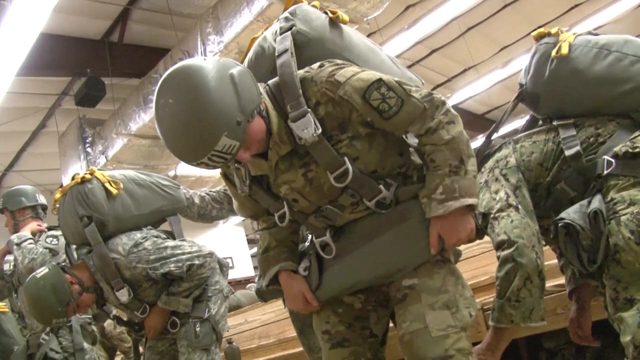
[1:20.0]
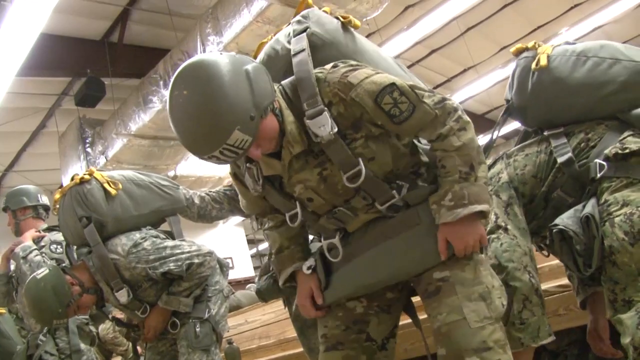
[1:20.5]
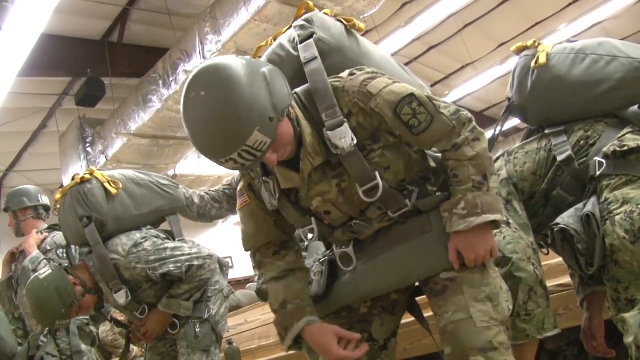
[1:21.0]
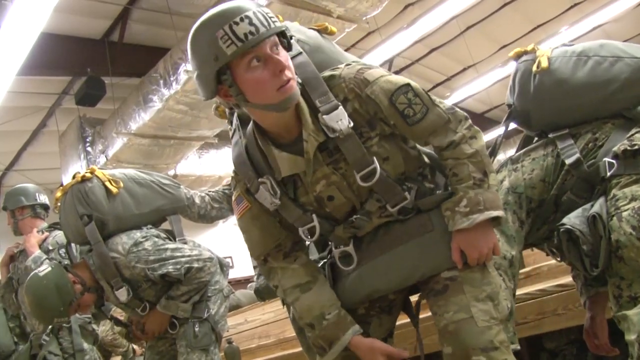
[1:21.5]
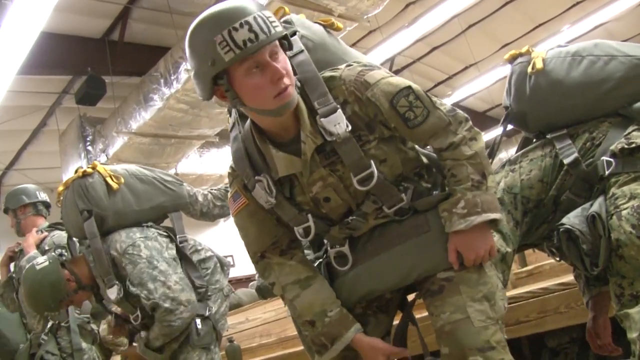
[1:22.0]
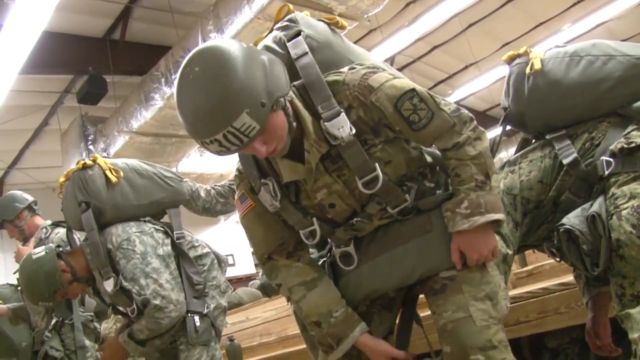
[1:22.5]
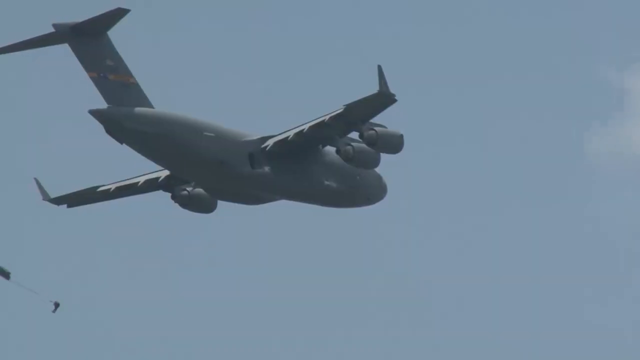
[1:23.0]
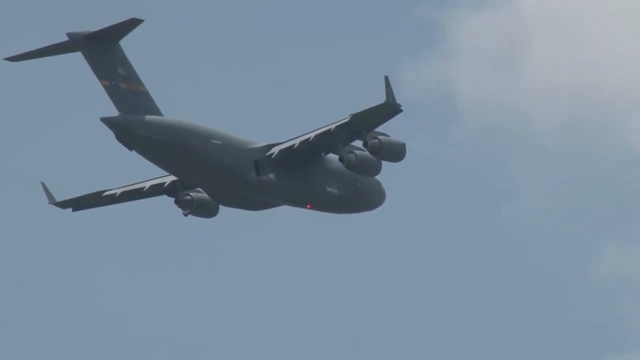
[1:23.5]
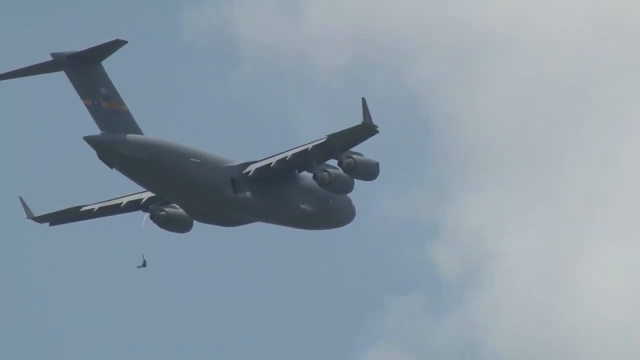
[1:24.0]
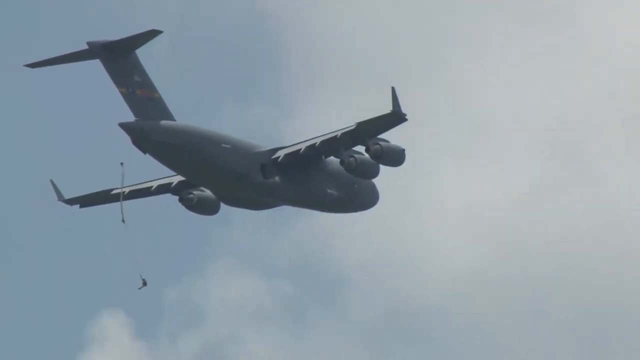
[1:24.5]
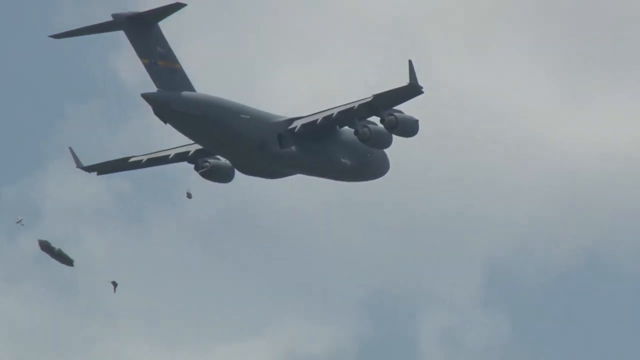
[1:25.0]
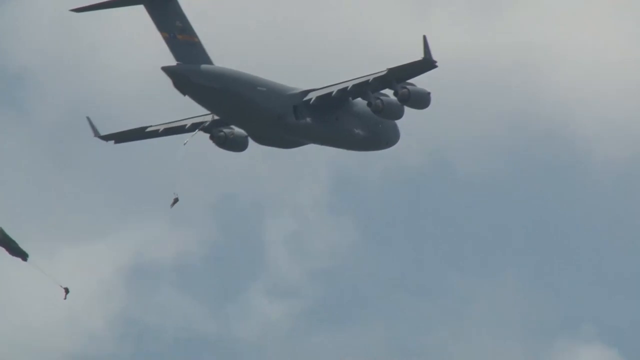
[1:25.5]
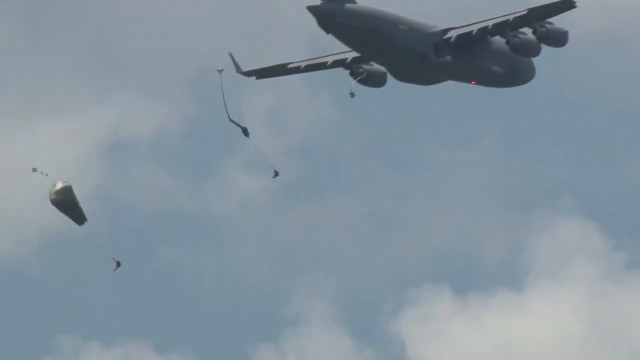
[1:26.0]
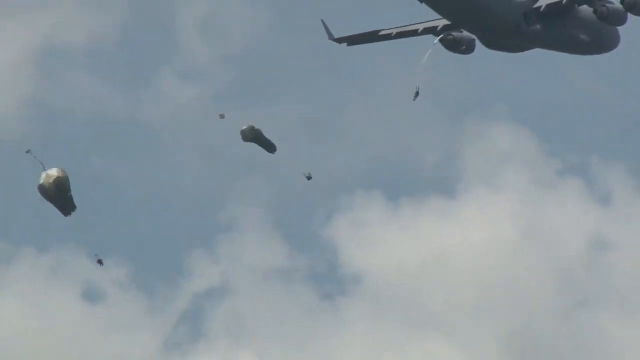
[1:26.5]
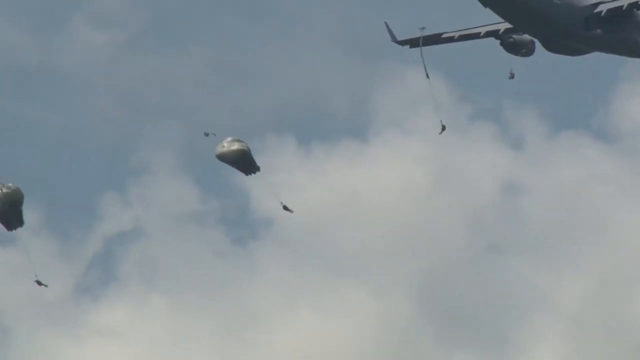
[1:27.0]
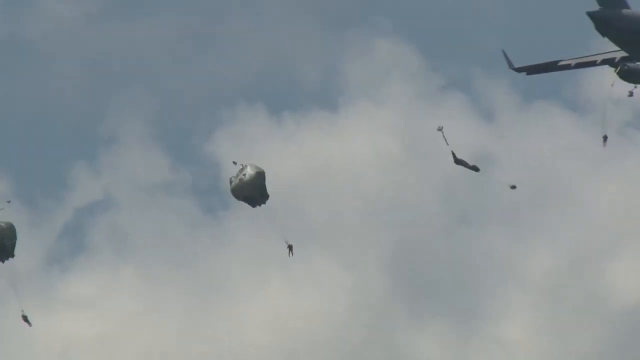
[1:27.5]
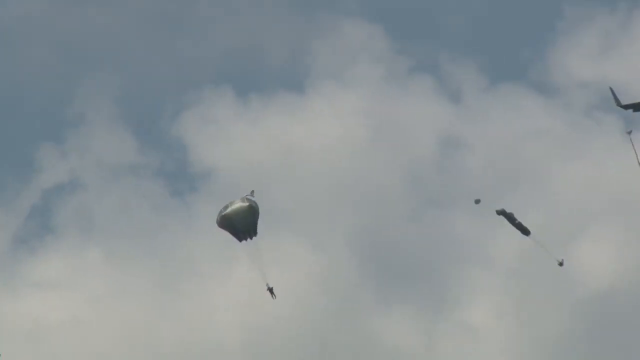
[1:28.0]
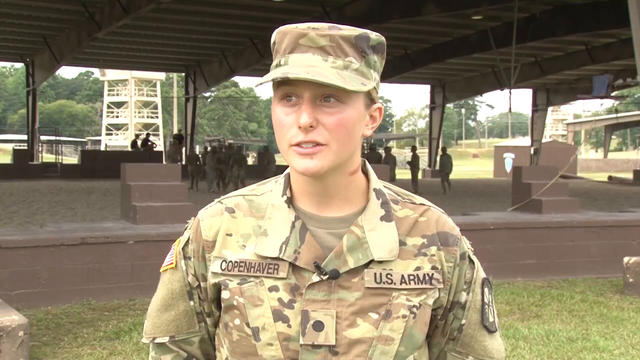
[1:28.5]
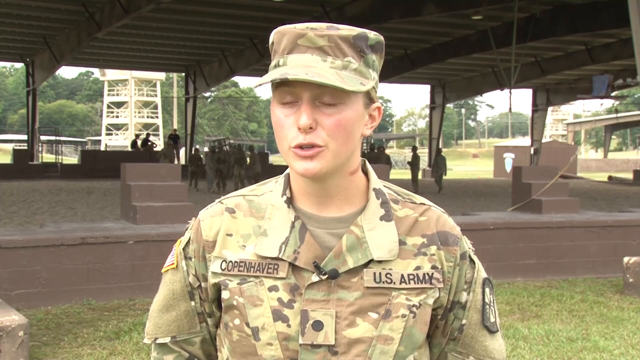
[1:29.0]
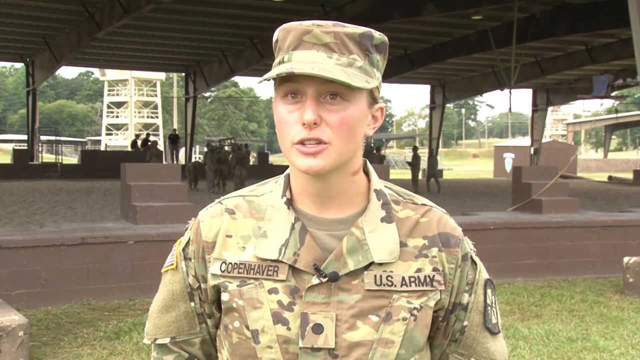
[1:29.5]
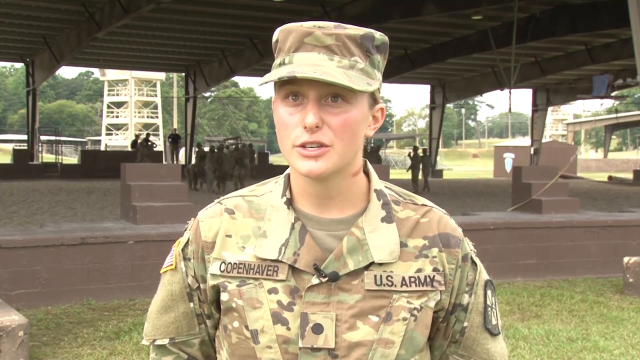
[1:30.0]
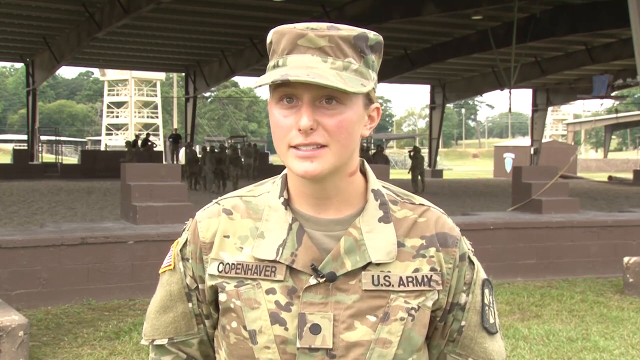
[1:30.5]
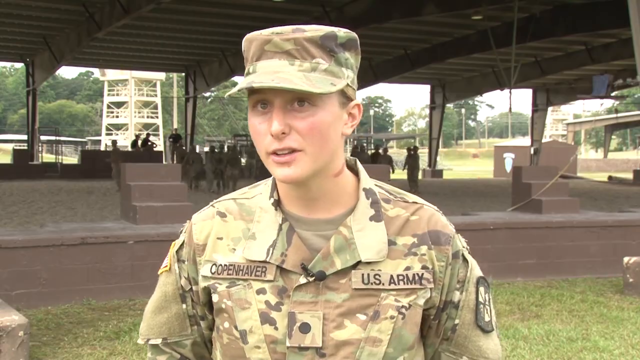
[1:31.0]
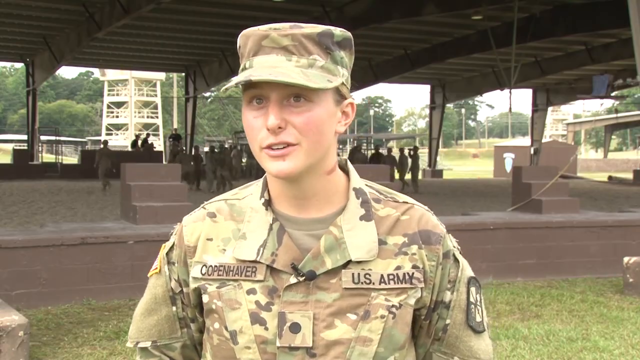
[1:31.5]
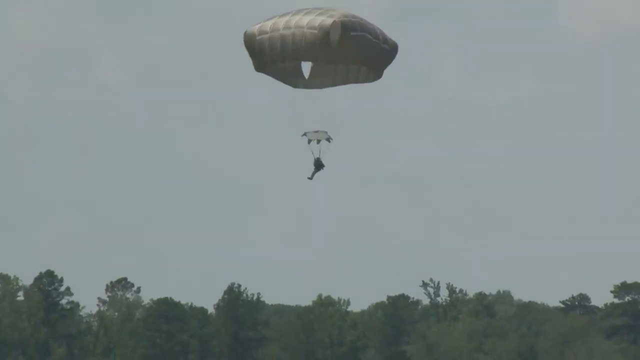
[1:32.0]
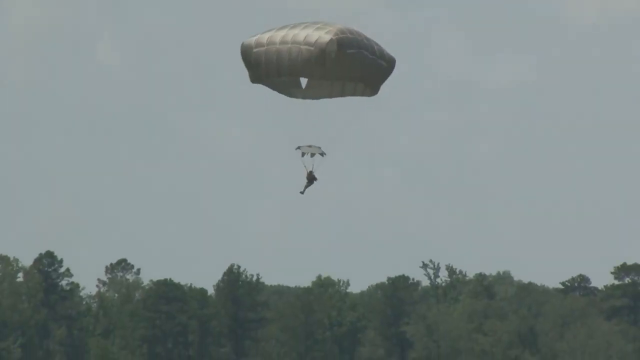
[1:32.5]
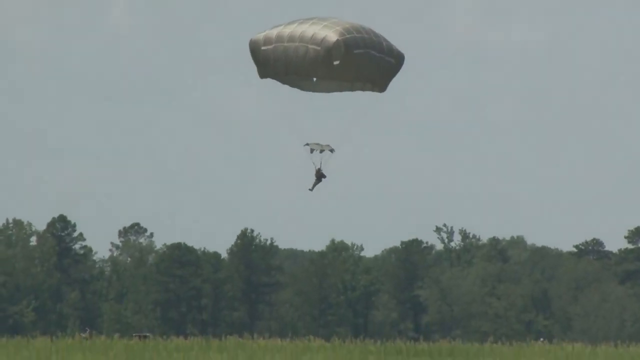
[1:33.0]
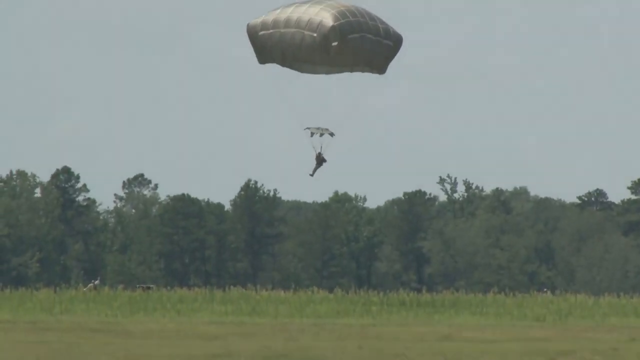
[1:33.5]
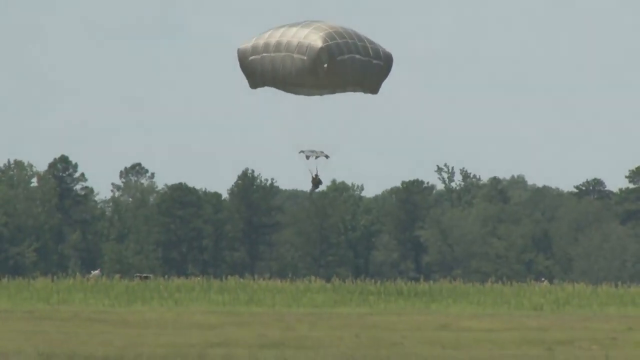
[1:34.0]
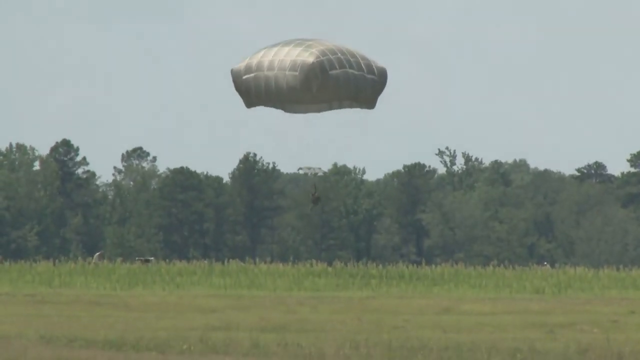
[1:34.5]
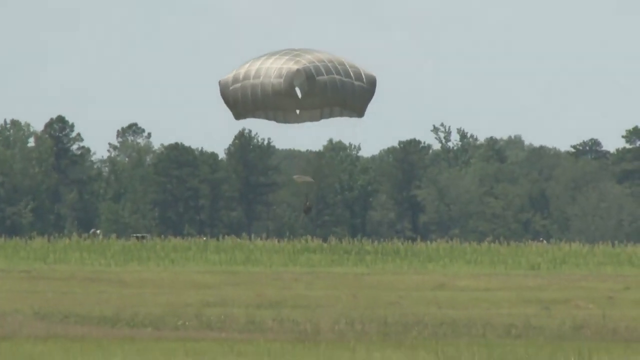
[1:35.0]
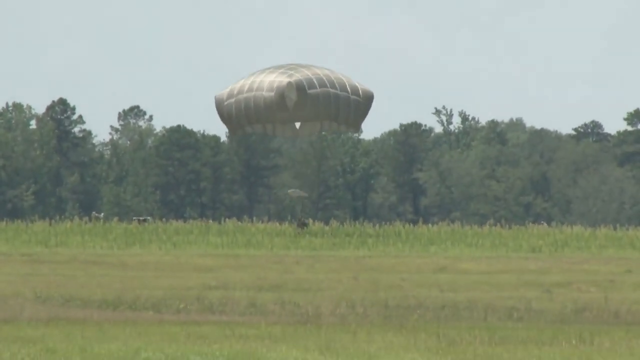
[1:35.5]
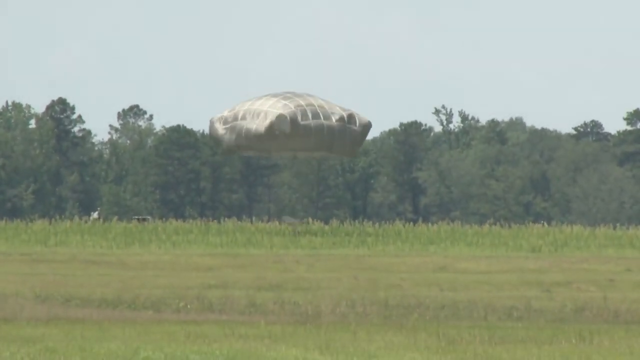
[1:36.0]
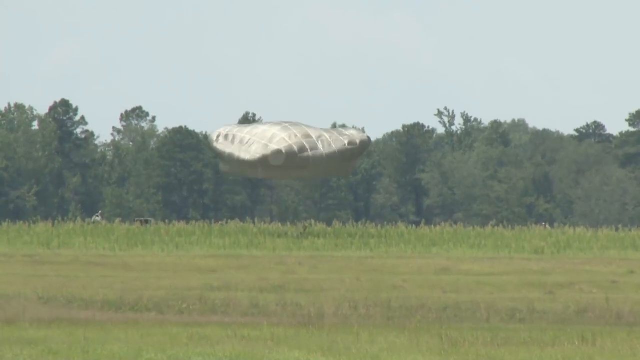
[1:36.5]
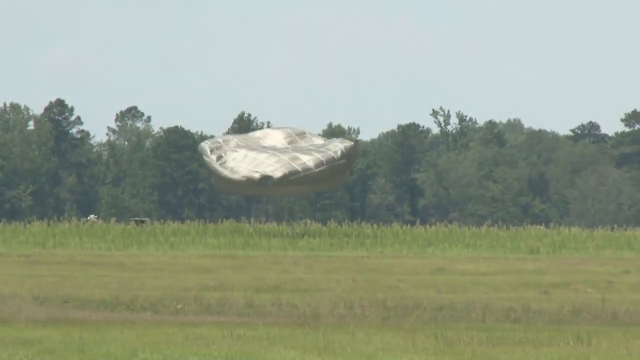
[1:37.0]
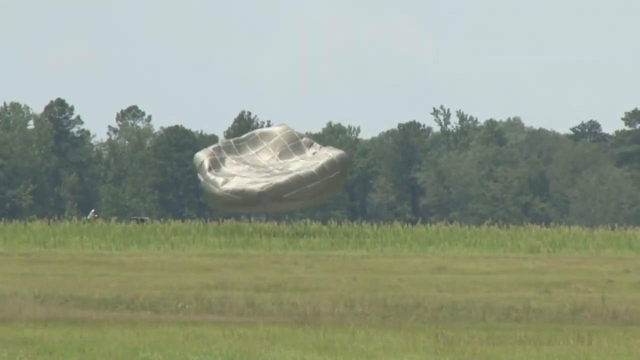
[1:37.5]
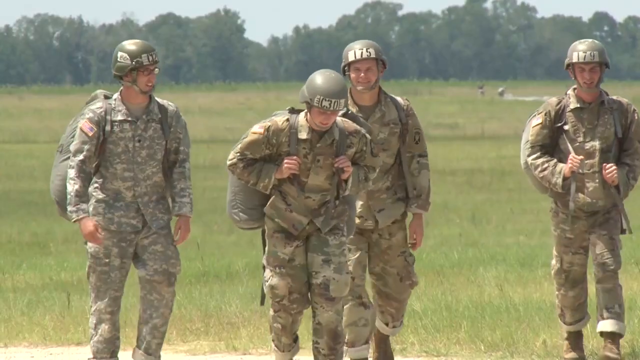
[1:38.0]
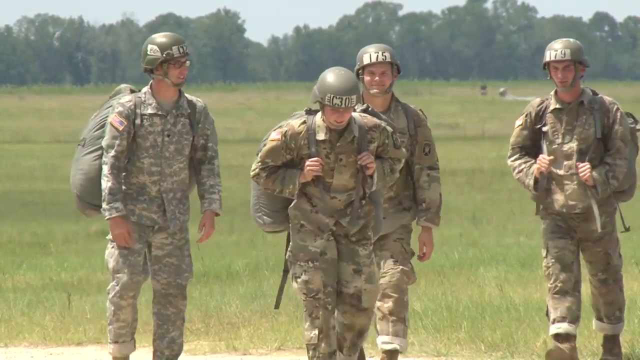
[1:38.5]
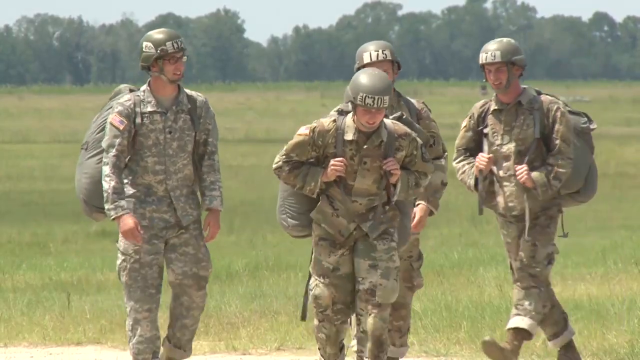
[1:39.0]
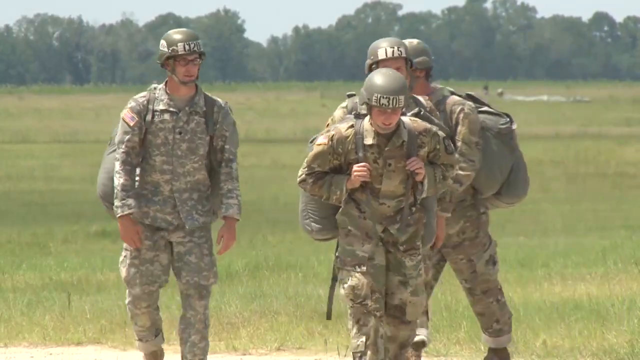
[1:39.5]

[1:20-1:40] Several soldiers in camouflage tops and bottoms wear parachutes on their backs. Next, the outside of a large, very fat-looking jet with four turbines appears. Somebody jumps out of it and deploys a parachute, another follows and deploys a parachute, and then another. A soldier in a camouflage shirt with an OD green-looking shirt underneath, a United States flag patch on the right arm just below the shoulder, and a camouflage cap talks to somebody off screen; there appears to be either a birthmark or a hickey on the left side of their neck, hard to tell which. A paratrooper with a deployed parachute falls slowly to the ground and lands. Four other paratroopers in camouflage fatigues and hard helmets walk through some grass.